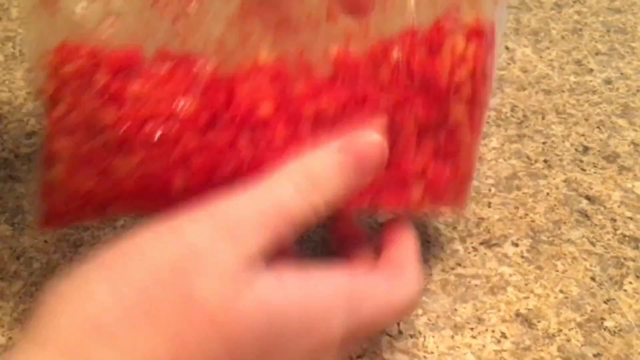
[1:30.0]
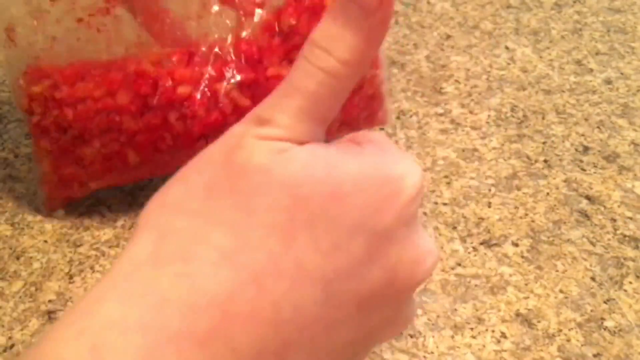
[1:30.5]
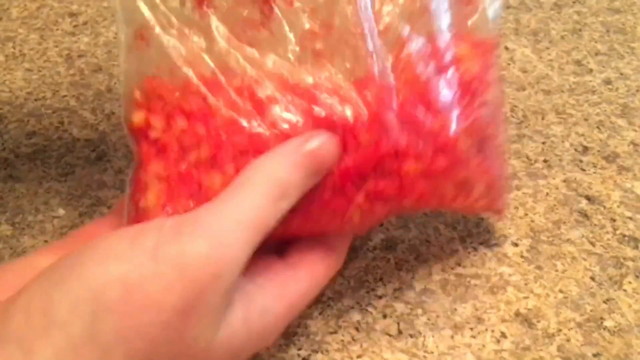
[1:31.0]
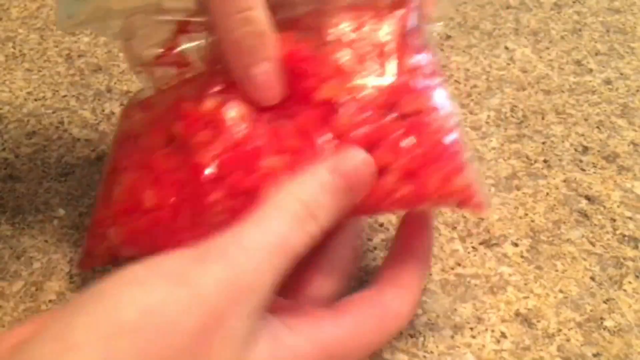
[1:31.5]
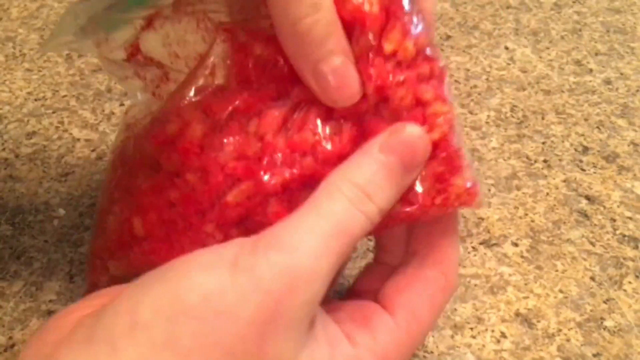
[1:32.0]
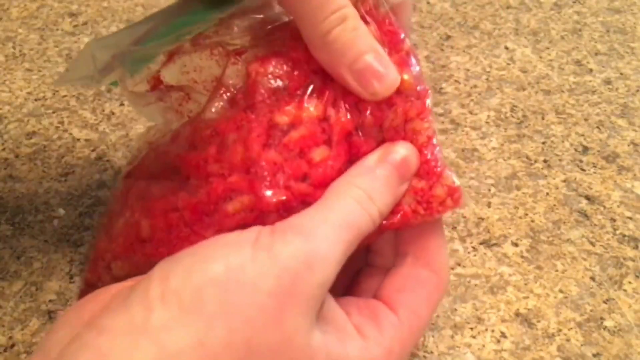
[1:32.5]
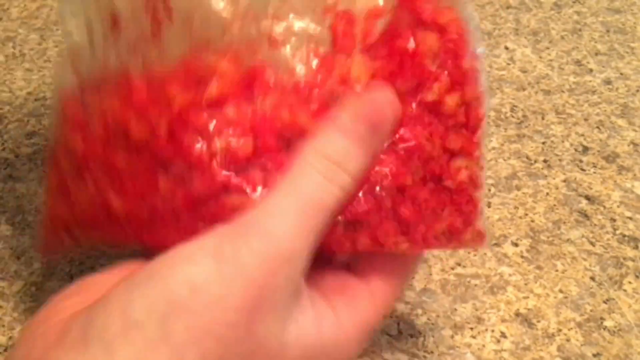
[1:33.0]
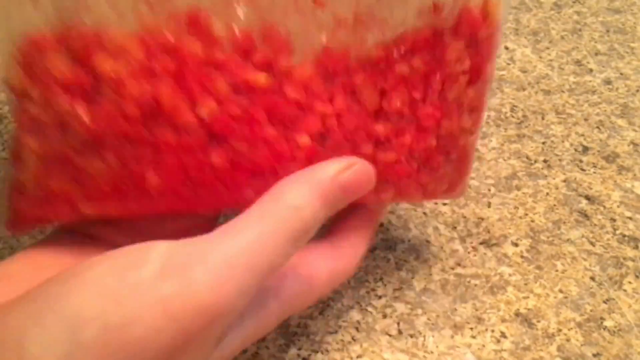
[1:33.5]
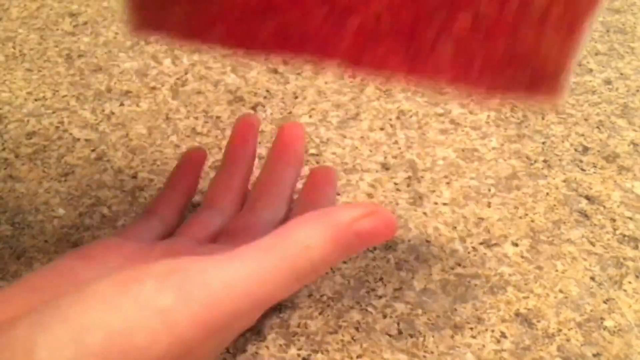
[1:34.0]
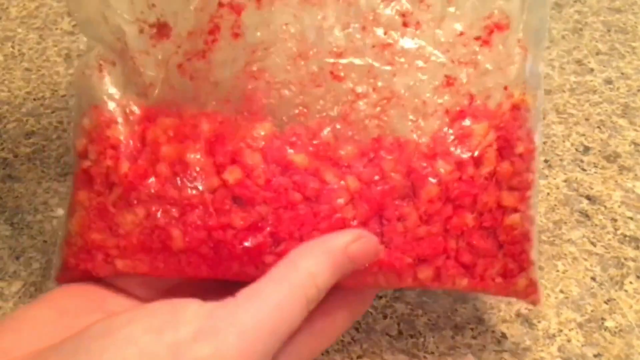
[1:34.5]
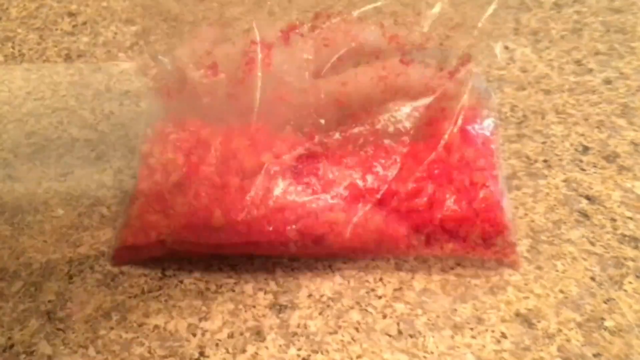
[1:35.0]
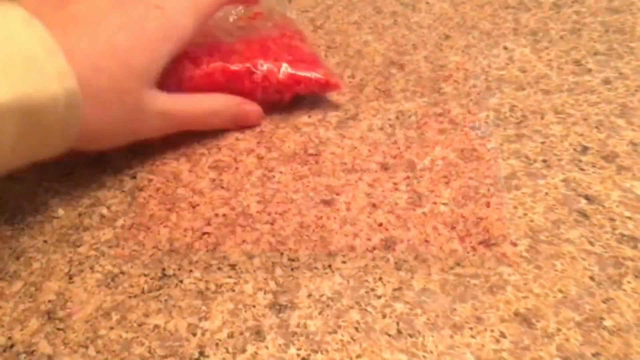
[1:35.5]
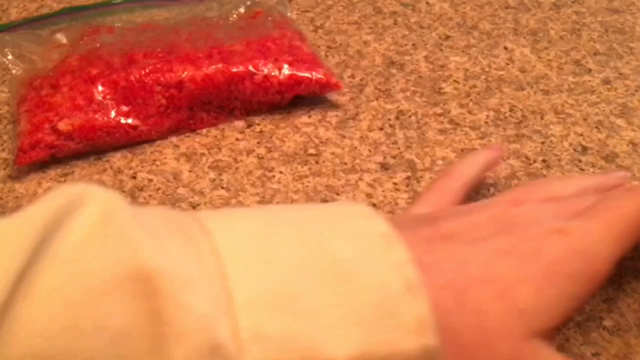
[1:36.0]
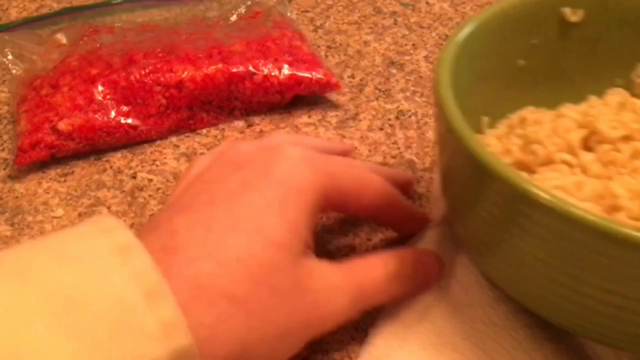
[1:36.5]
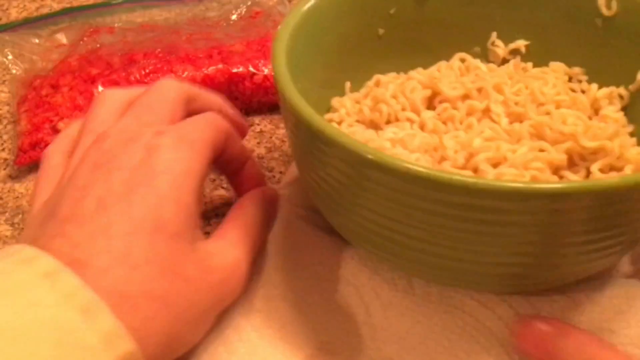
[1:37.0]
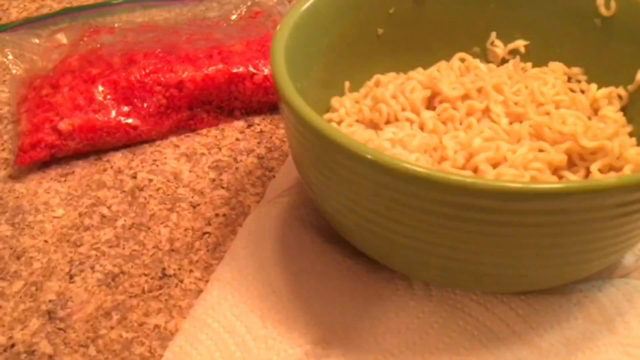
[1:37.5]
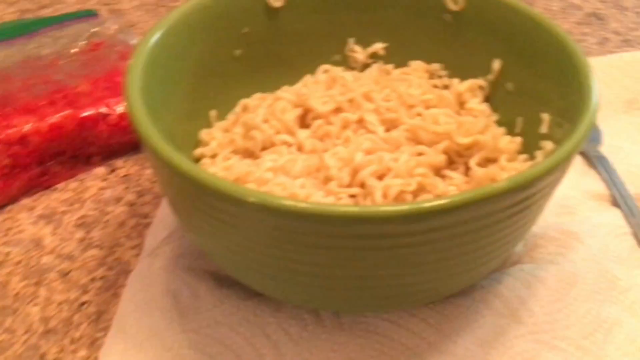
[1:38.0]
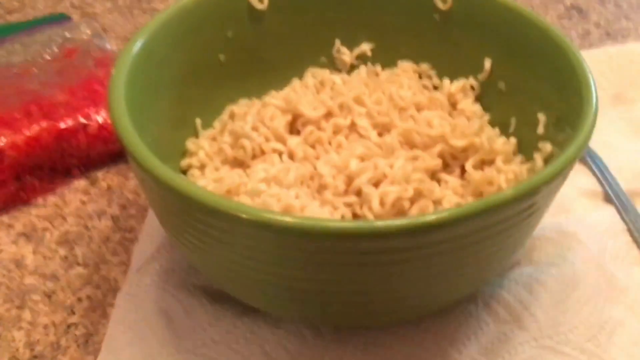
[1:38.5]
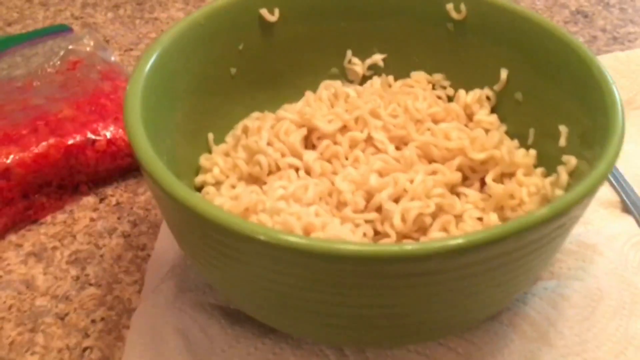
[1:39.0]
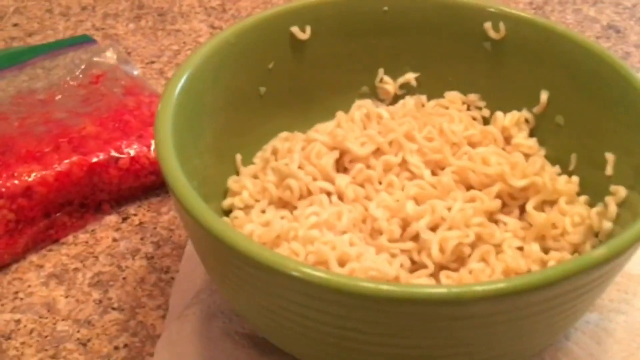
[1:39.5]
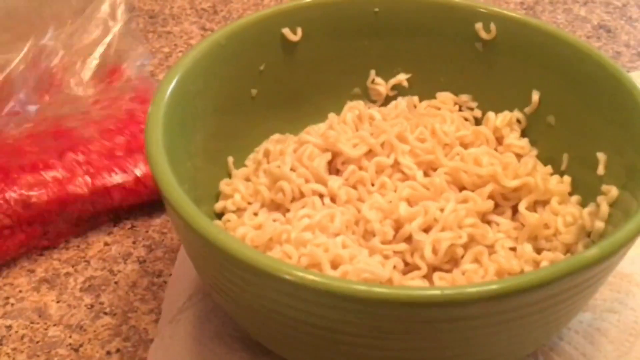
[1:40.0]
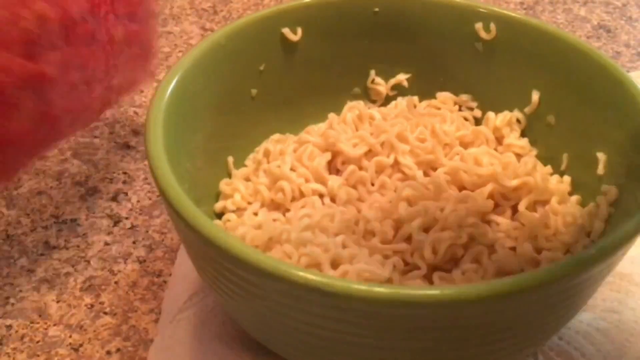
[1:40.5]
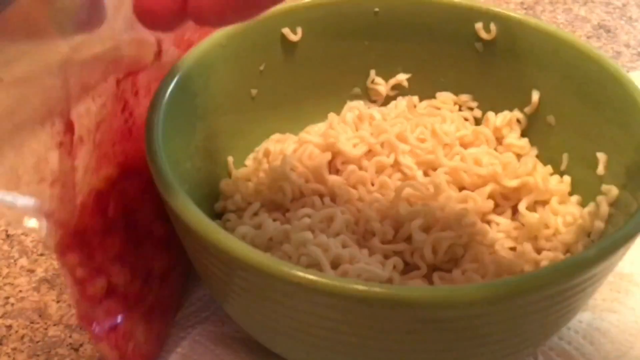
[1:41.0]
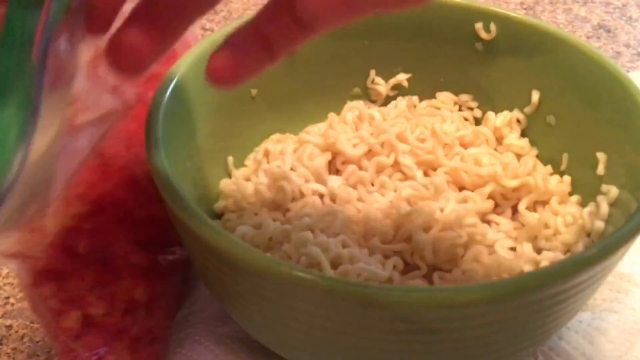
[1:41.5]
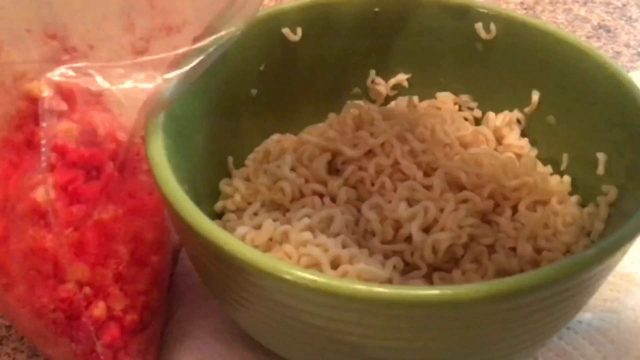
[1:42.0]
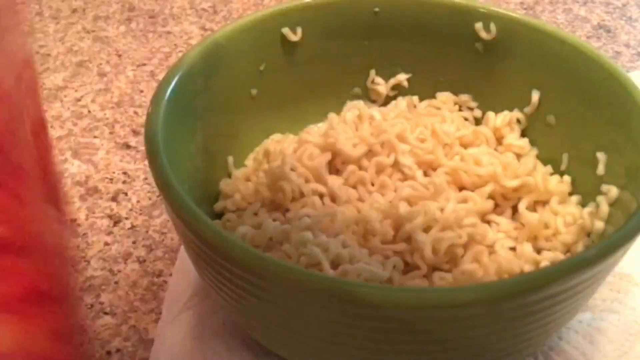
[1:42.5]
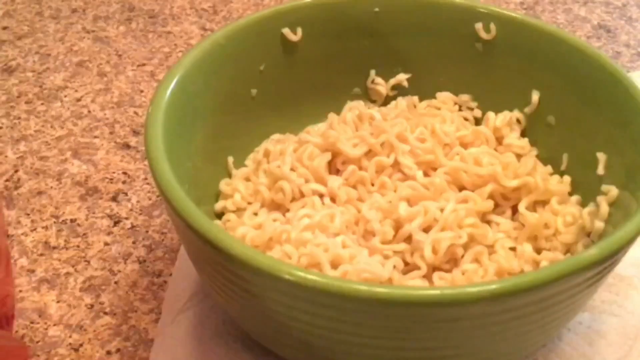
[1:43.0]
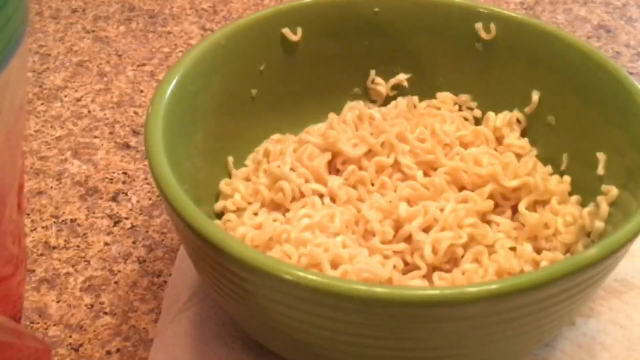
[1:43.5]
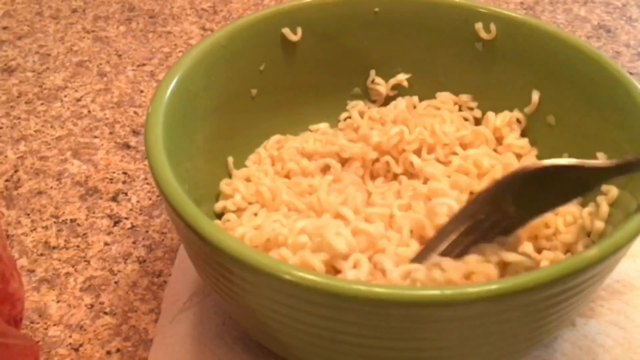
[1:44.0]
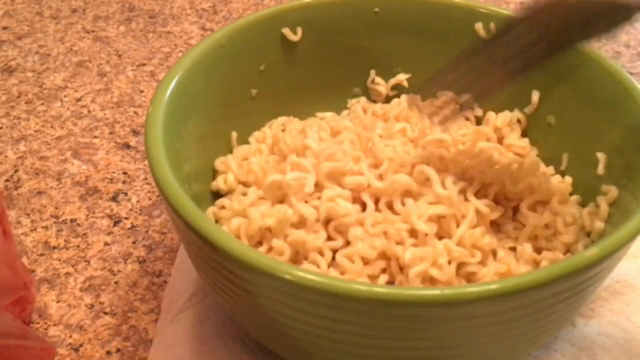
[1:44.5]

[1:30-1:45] A sandwich bag full of very smashed flaming red hot Cheetos is visible. After showing the contents, the person sets the bag down on the left-hand side of the countertop. From the right of the shot, the person pulls the green ceramic cereal bowl back into sight; it is still on a white paper towel. A silver fork is to the right of the bowl; it is picked up and moves the noodles around. The person then picks up the sandwich baggie of Cheetos and holds it up next to the bowl, picks up the fork, places it in the bowl, and moves the ramen noodles around.